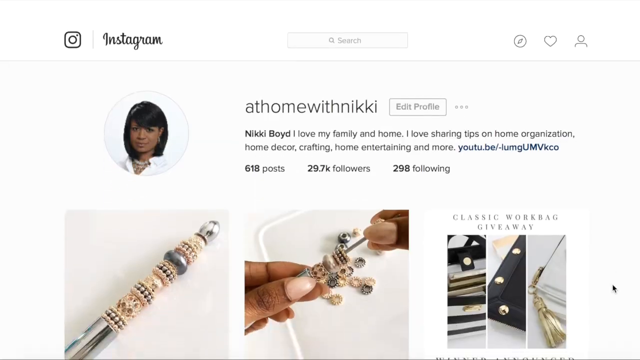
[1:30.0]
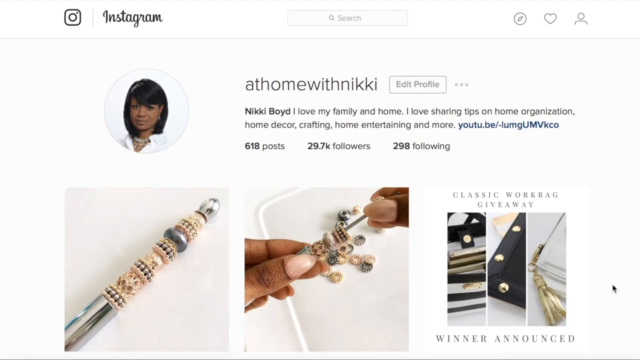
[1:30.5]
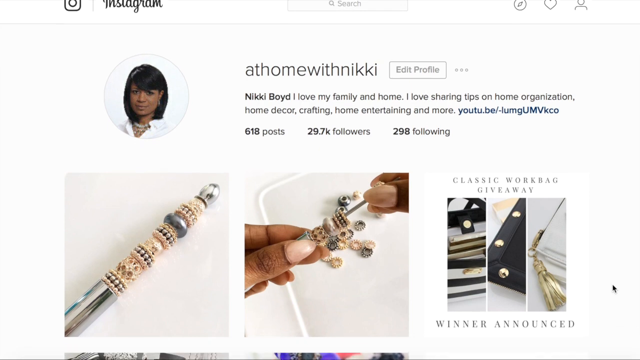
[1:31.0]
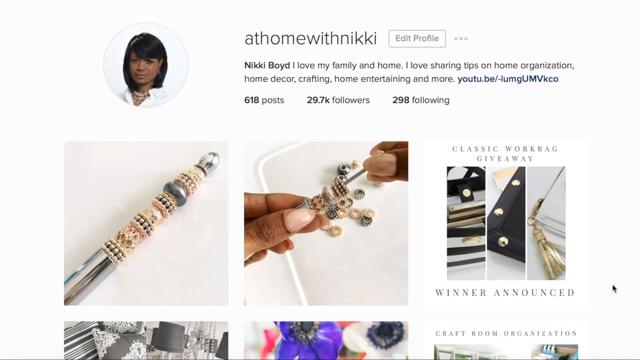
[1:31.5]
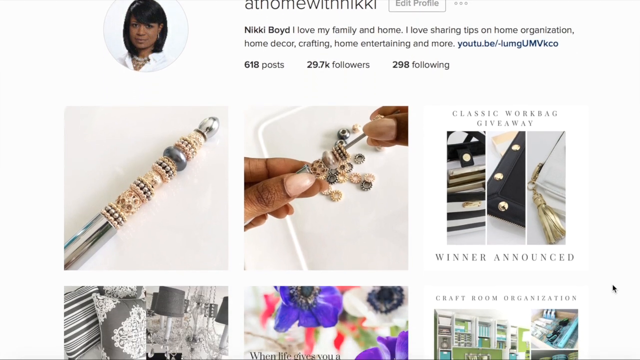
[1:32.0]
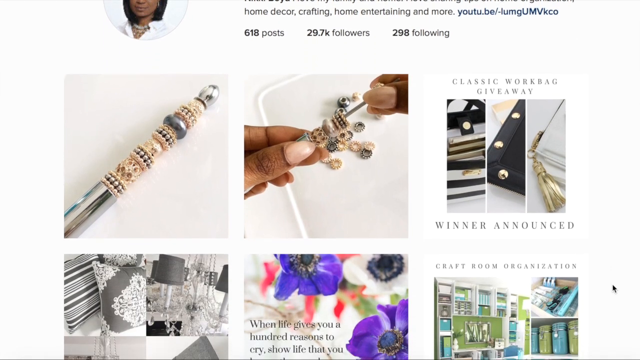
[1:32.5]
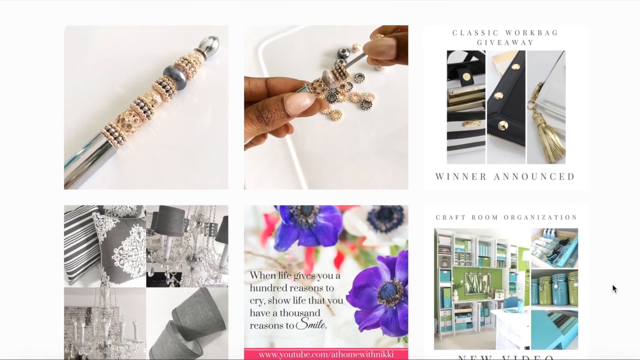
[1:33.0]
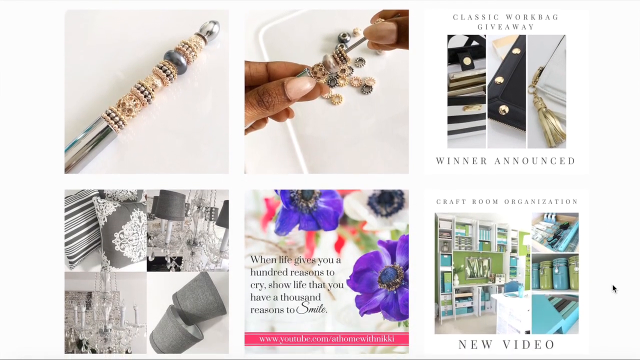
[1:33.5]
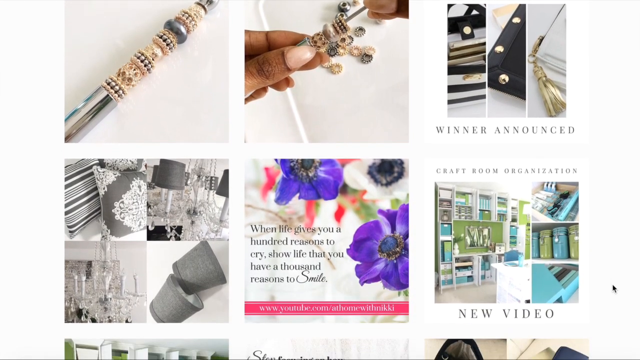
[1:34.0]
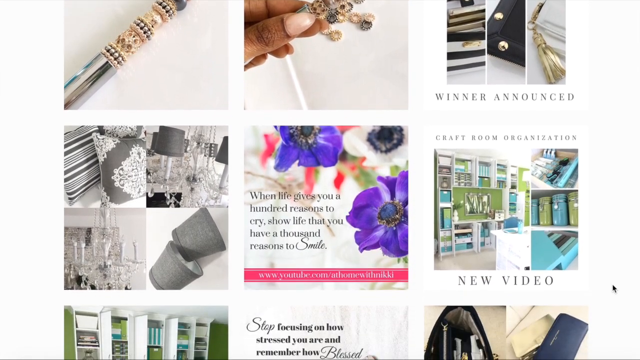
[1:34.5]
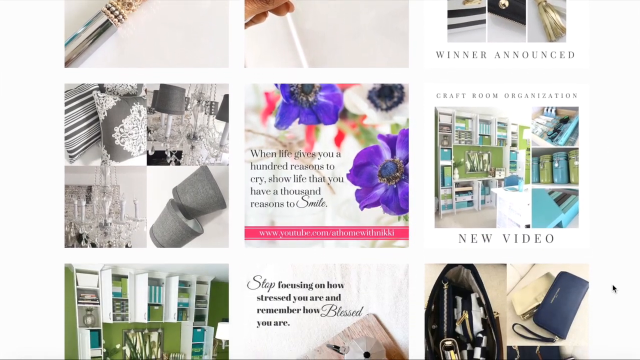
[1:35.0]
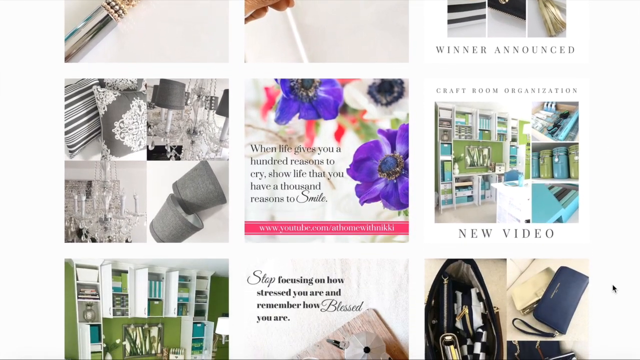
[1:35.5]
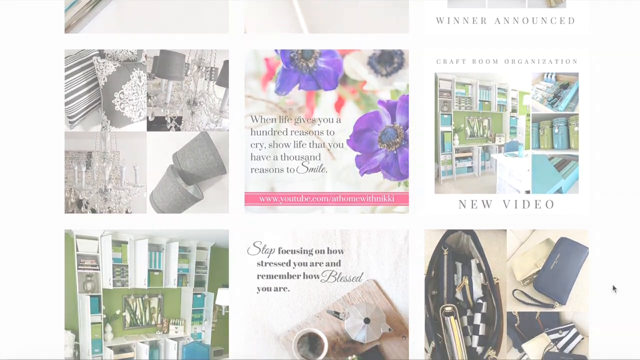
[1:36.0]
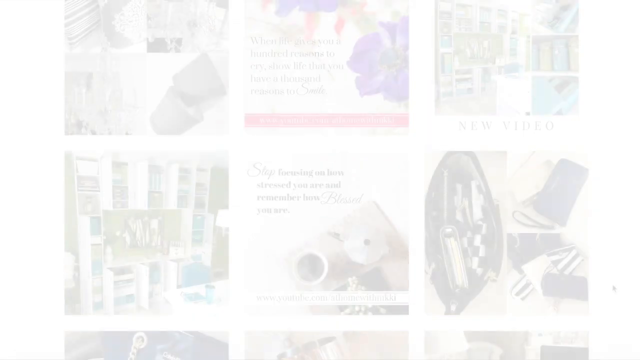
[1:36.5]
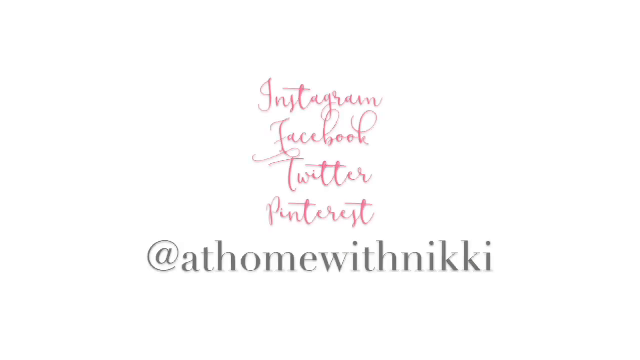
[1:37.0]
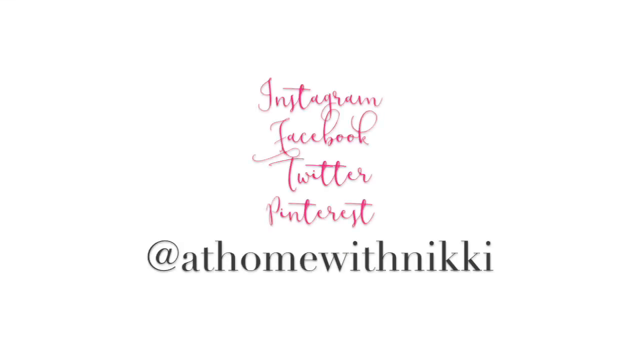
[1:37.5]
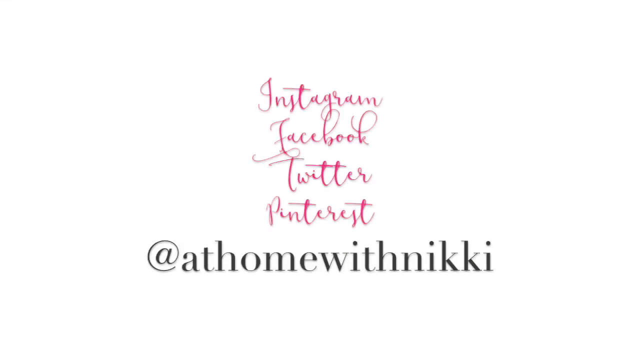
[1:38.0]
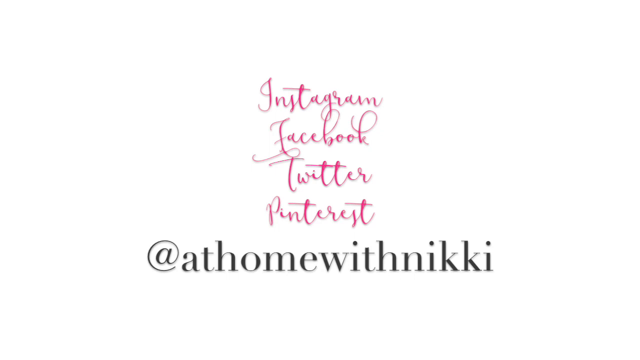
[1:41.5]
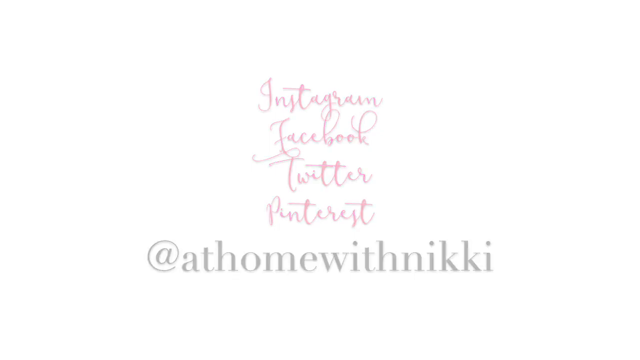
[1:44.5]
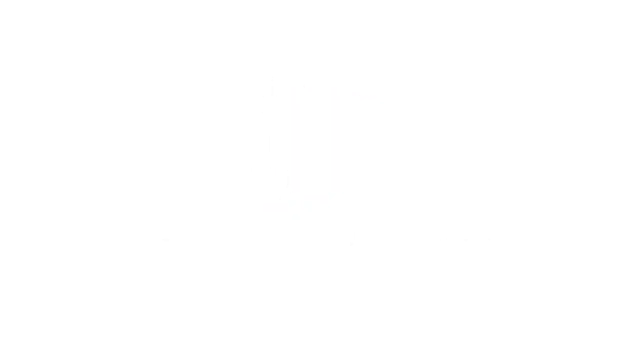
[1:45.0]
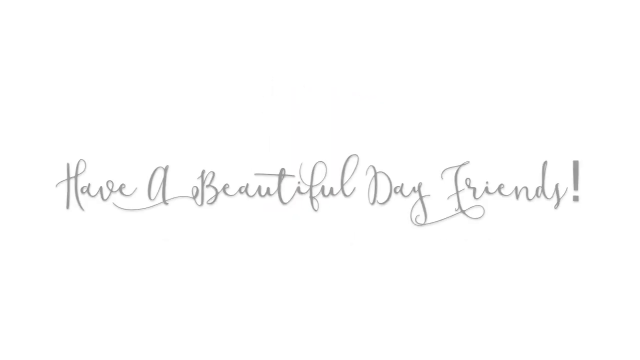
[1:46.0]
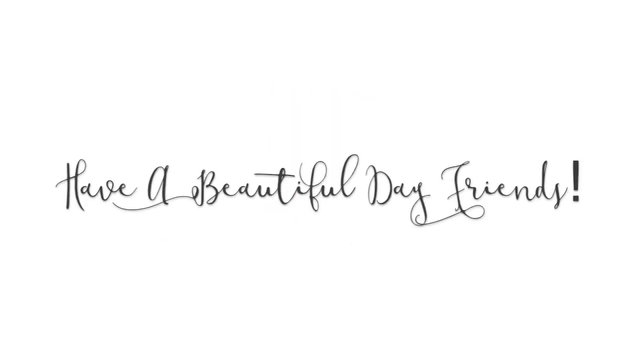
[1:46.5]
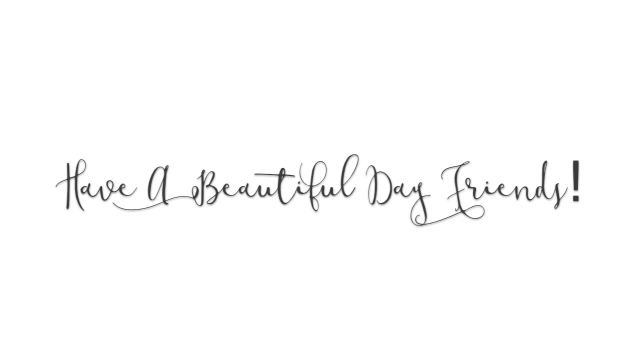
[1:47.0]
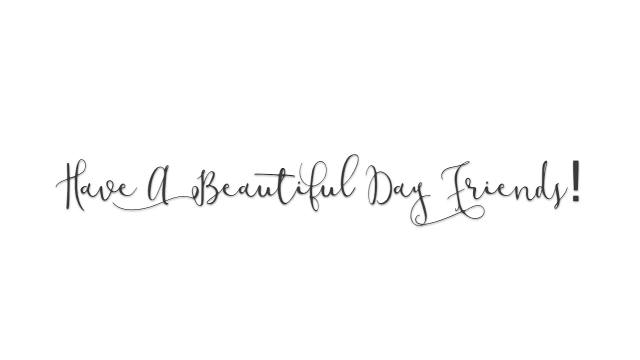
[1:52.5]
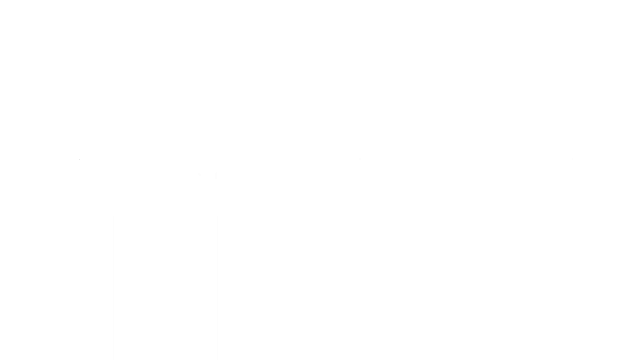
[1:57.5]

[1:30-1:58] The Instagram page of the woman who gave away the bag, at home with Nikki, appears. Her name is Nikki, and the bio reads "I love my family and home. I love sharing tips on home organization home decor crafting home entertaining and more", with a YouTube link, probably to her page. There are shots of jewelry, another giveaway video lower down, and a head shot of her in the left-hand corner, on a very white background. The page scrolls to show more of her posts: mostly home decor, including decorative pillows, lampshades, what looks like a candelabra, and motivational pictures. Then a white background shows "at home with Nikki" in black and "Instagram Facebook Twitter and Pinterest" in reddish pink, which stays up for a considerable time before disappearing. Black script then reads "have a beautiful day friend!" and the video ends.